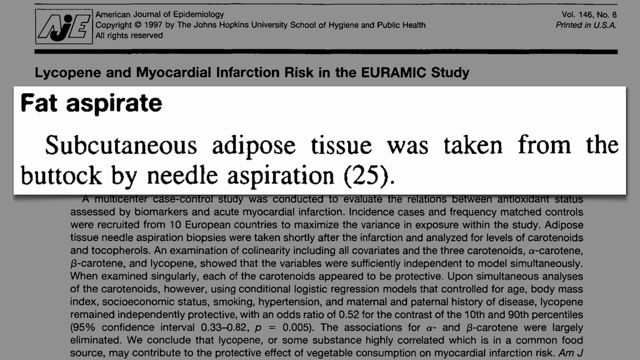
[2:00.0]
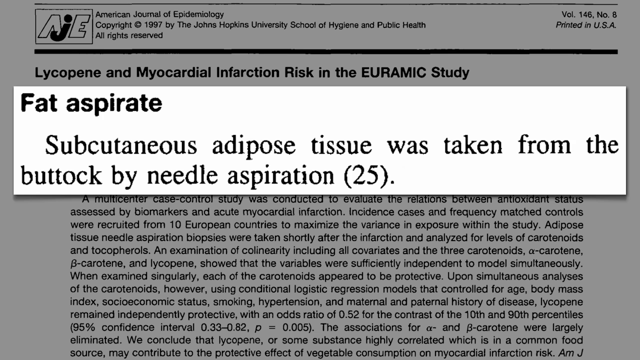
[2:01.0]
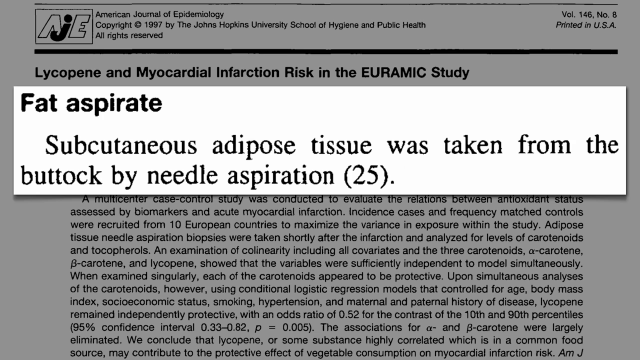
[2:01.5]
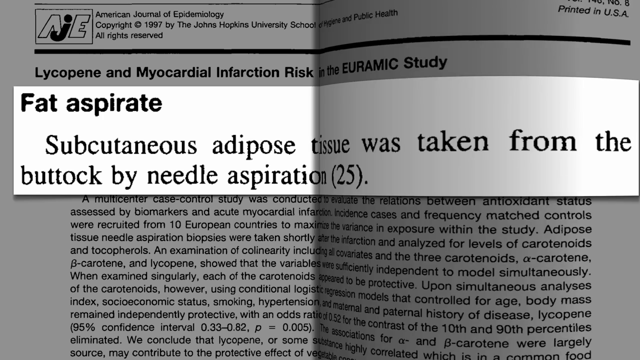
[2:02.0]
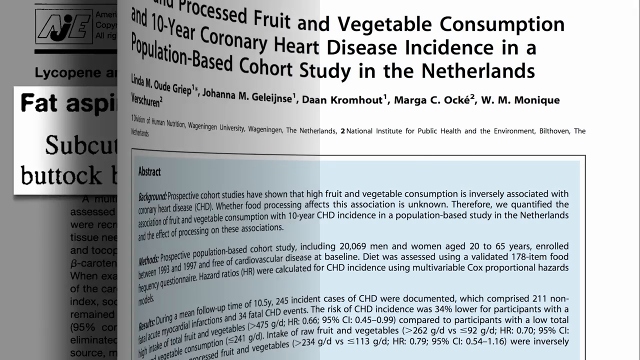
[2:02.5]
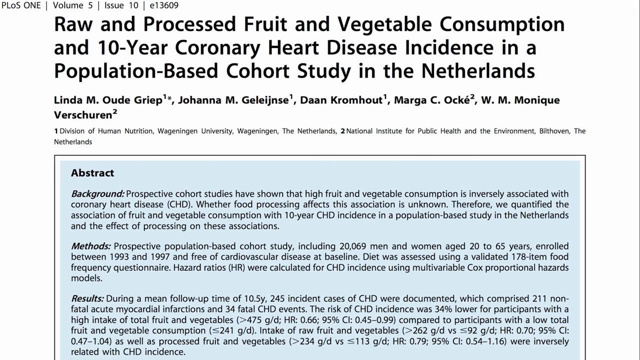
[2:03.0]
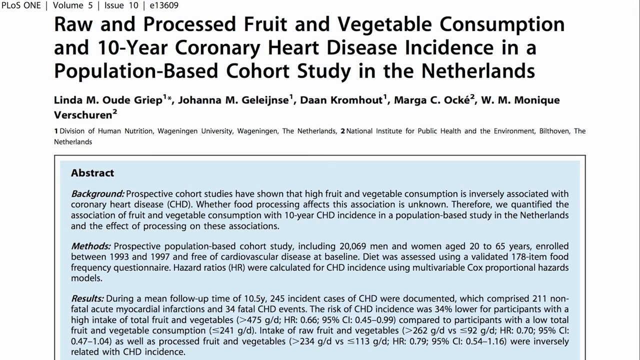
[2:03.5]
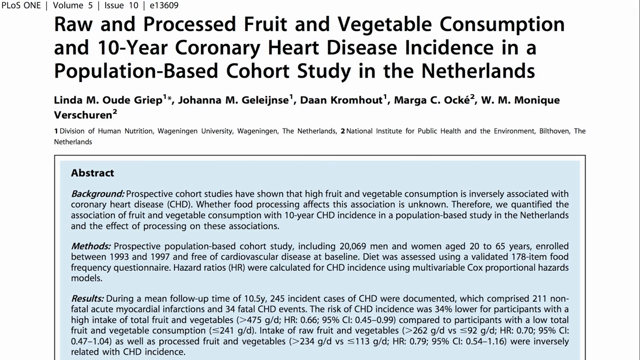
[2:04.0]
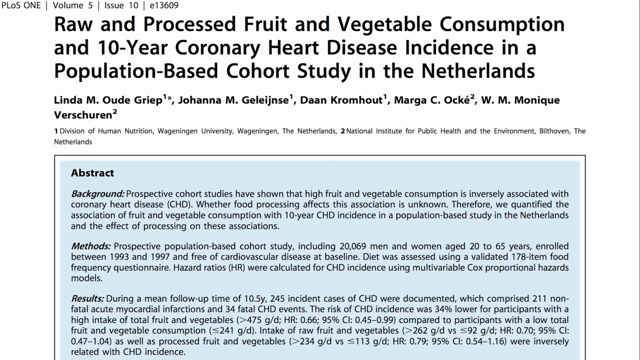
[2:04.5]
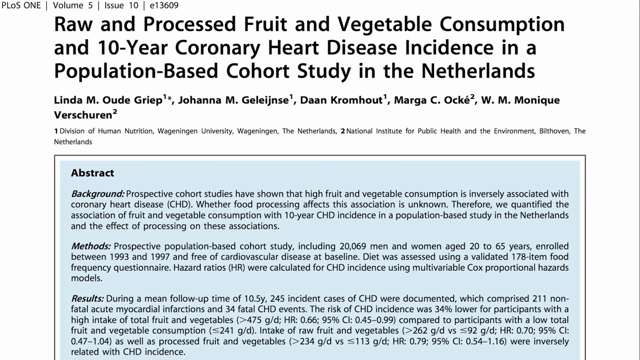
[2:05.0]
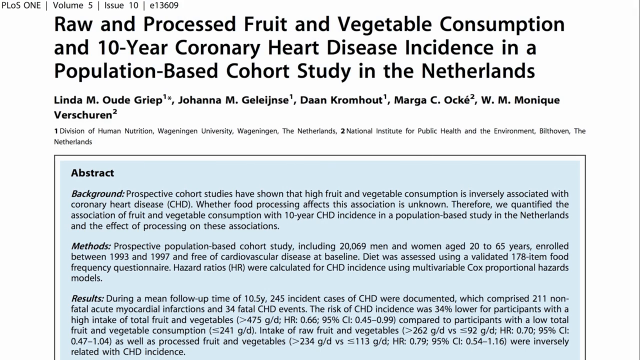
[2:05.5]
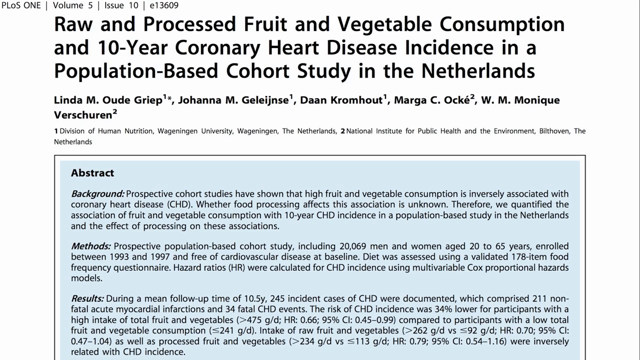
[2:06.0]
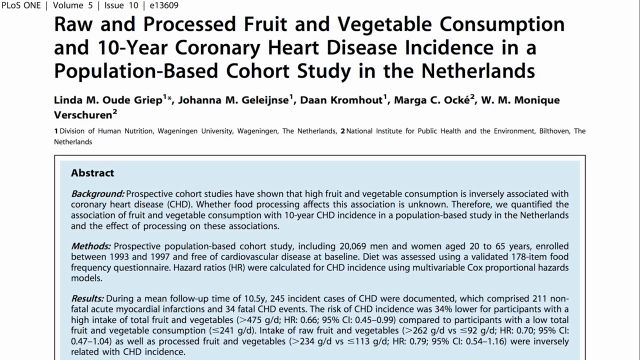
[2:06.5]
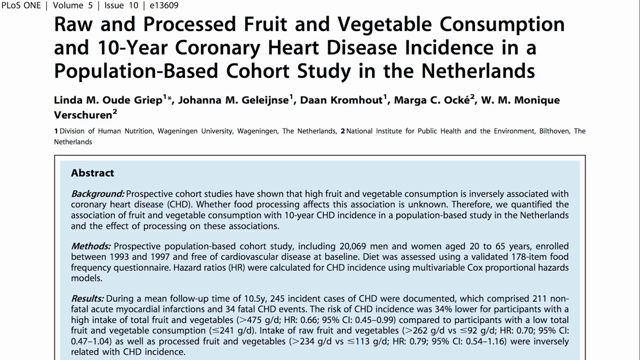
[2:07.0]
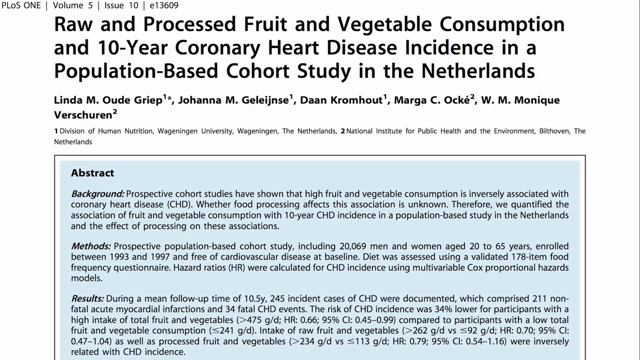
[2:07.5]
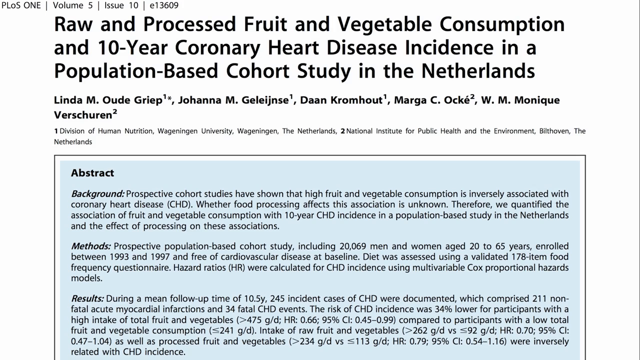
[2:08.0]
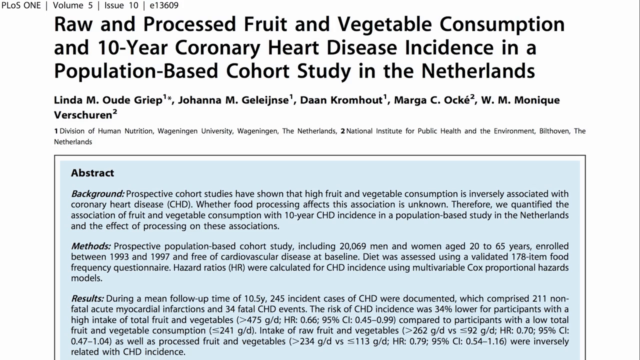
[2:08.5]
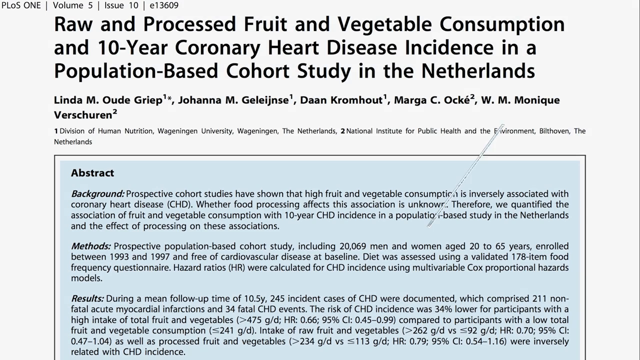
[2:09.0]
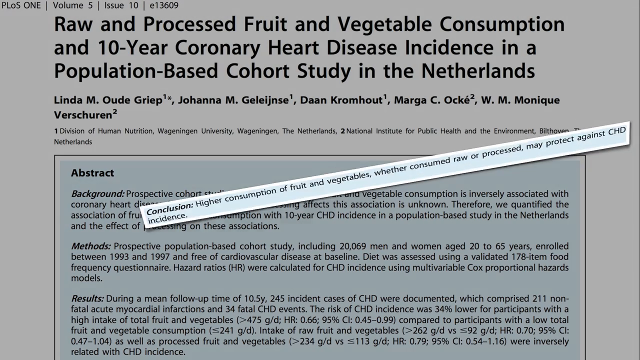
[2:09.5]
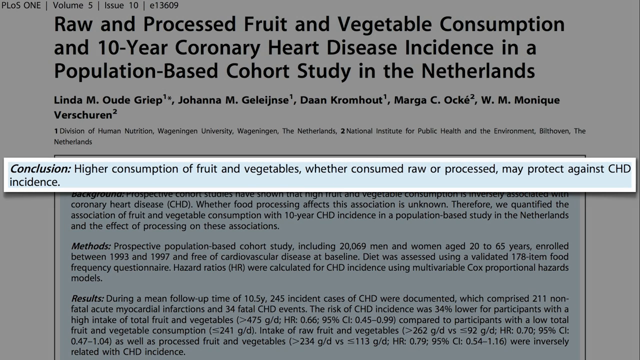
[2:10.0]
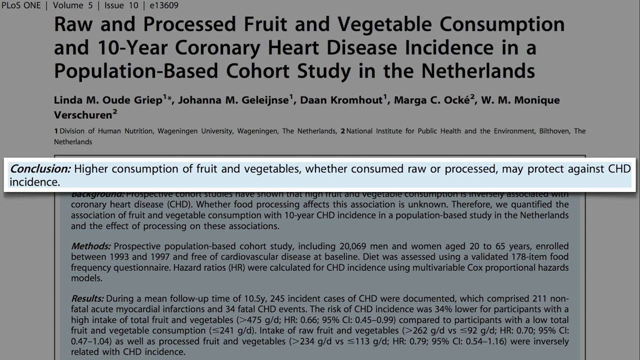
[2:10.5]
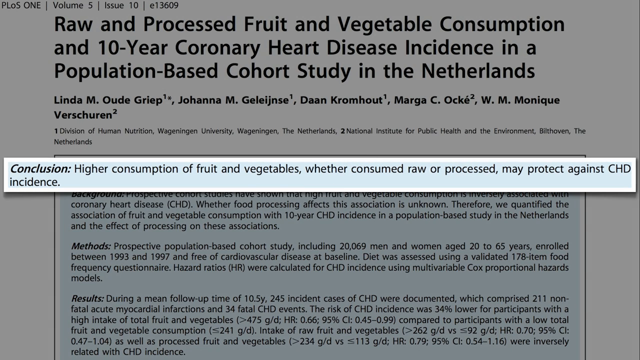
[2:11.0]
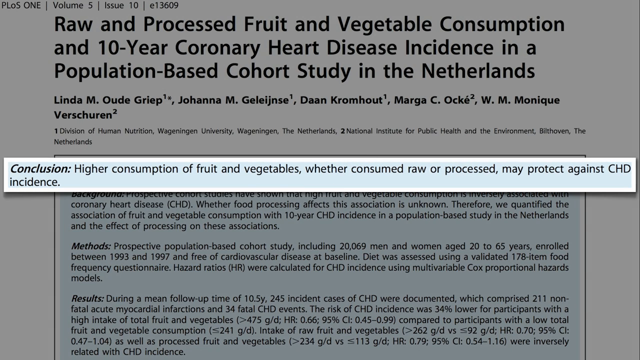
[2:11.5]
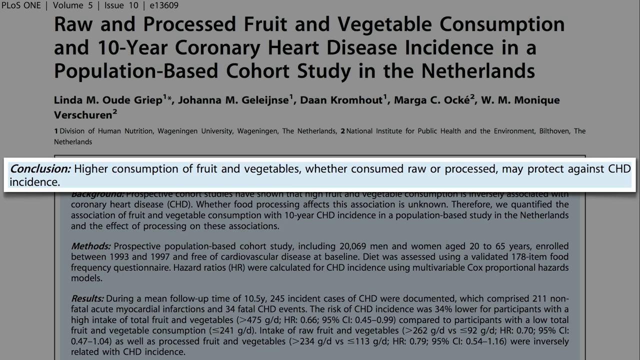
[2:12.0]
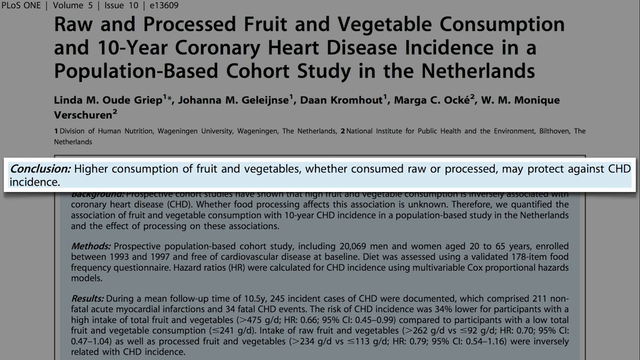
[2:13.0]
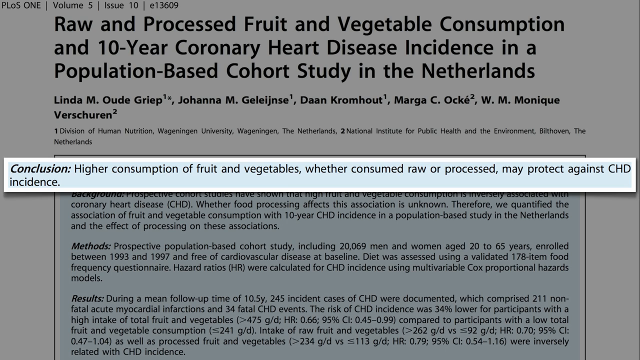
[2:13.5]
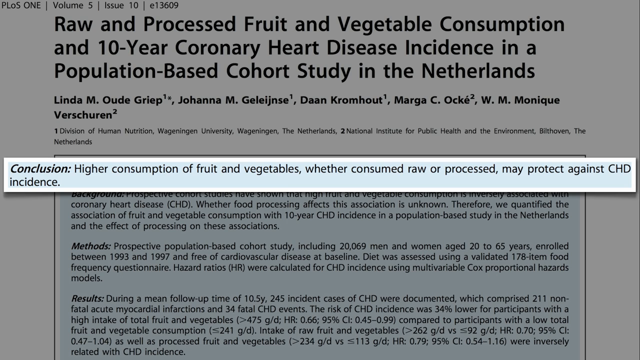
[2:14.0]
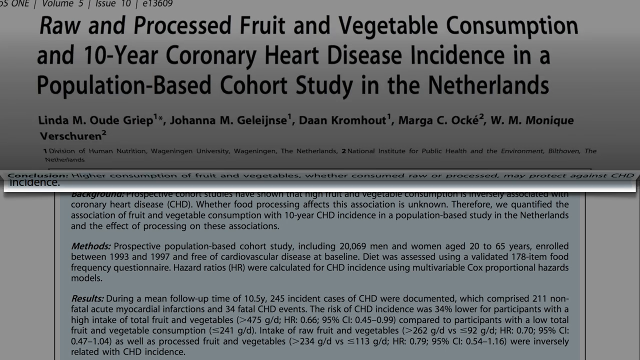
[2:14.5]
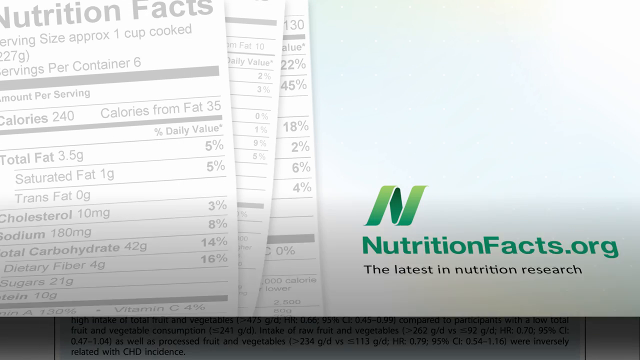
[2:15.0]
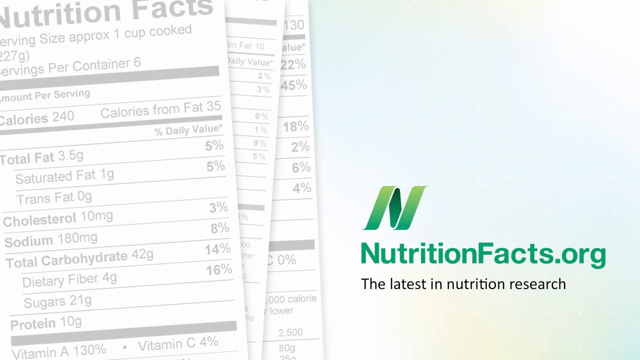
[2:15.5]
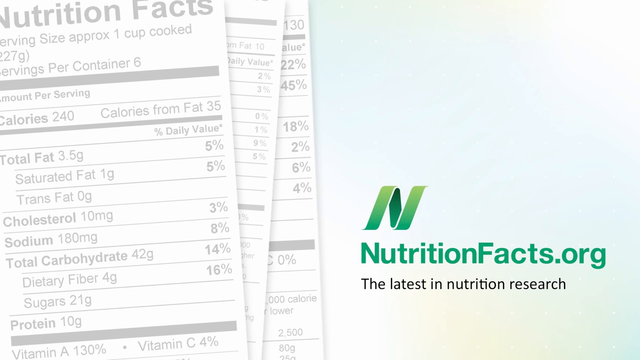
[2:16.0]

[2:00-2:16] A slide about "lycopene and myocardial infarction risk in the URAMIC study" from the American Journal of Epidemiology, copyright 1997 by the Johns Hopkins University School of Hygiene and Public Health, shows a lot of text about the findings. Superimposed on top in a white rectangle is the part presented as most important: "fat aspirate subcutaneous adipose tissue was taken from the buttock by needle aspiration," followed by 25 in parentheses. The video then turns a page to the right as though it were a book and goes back to the study shown earlier, "raw and processed fruit and vegetable consumption and 10 year coronary heart disease incidence in a population-based cohort study in the Netherlands," with its abstract in a blue rectangle. A little blue box in front highlights the most important part: "conclusion, higher consumption of fruits and vegetables, whether consumed raw or processed may protect against CHD incidence."